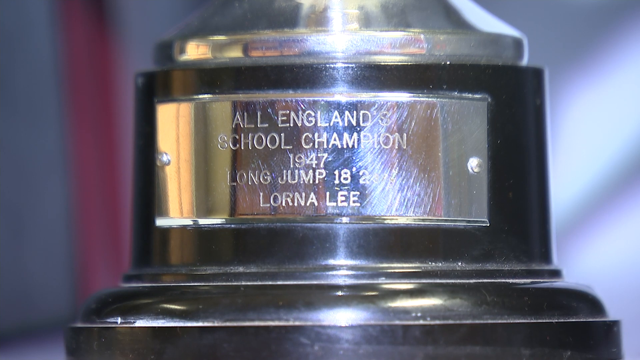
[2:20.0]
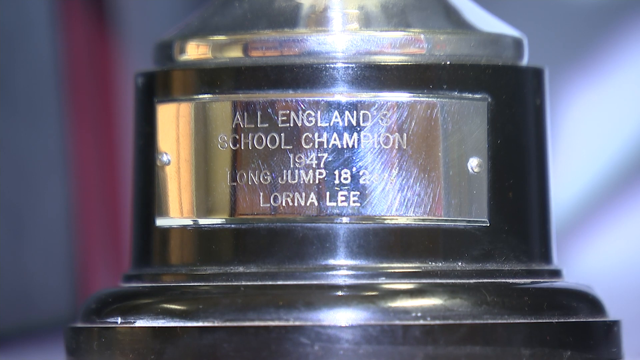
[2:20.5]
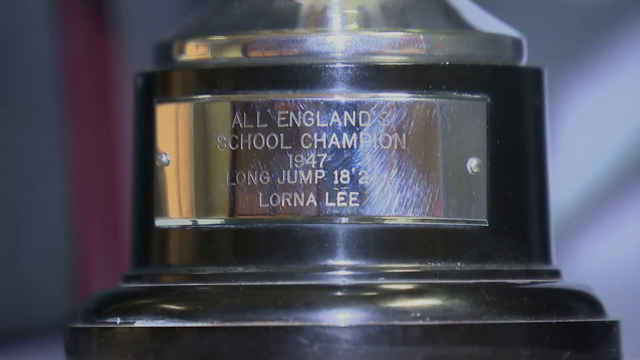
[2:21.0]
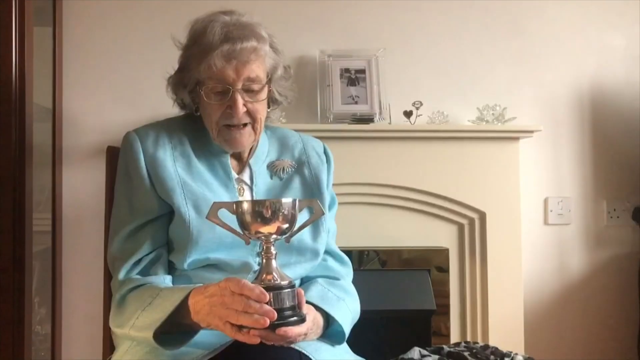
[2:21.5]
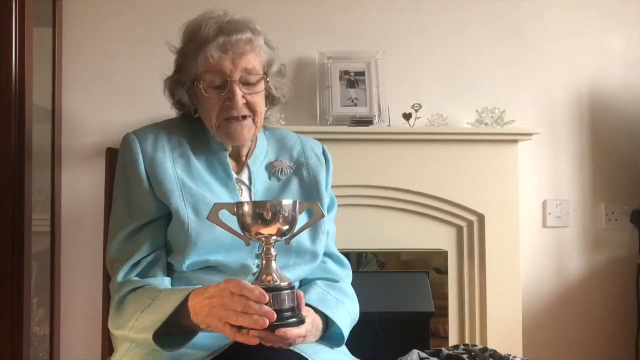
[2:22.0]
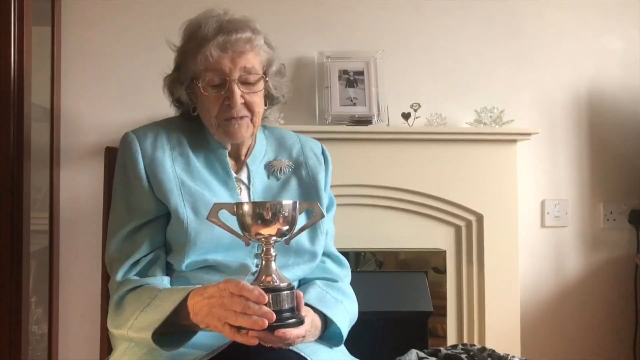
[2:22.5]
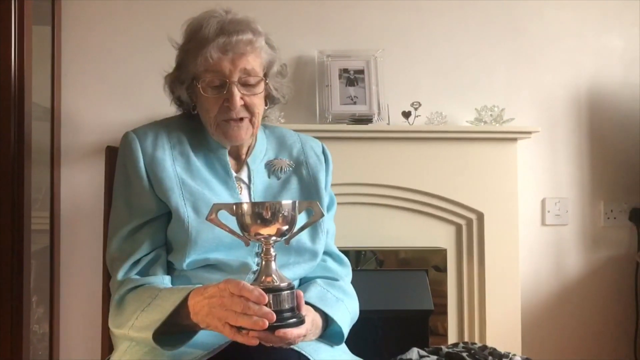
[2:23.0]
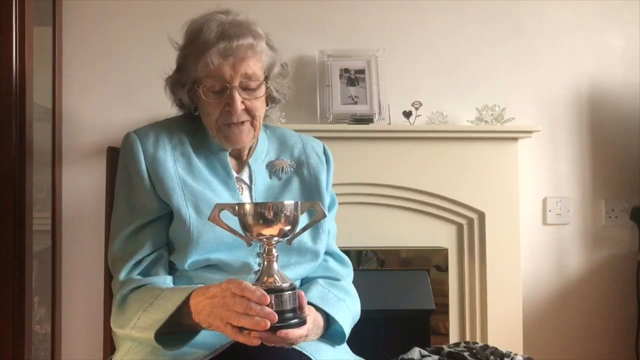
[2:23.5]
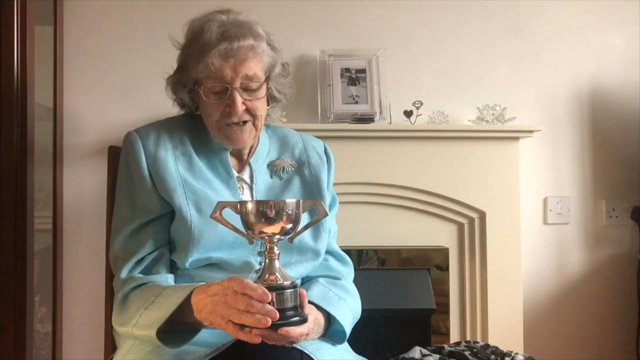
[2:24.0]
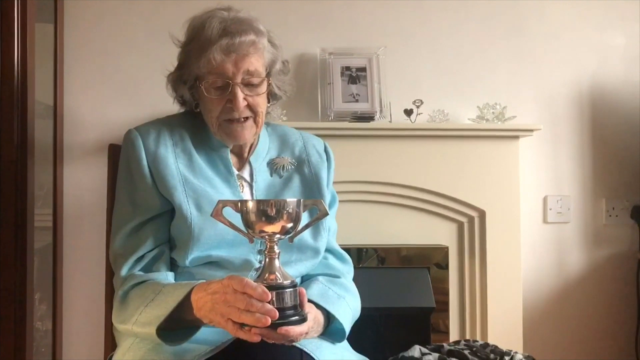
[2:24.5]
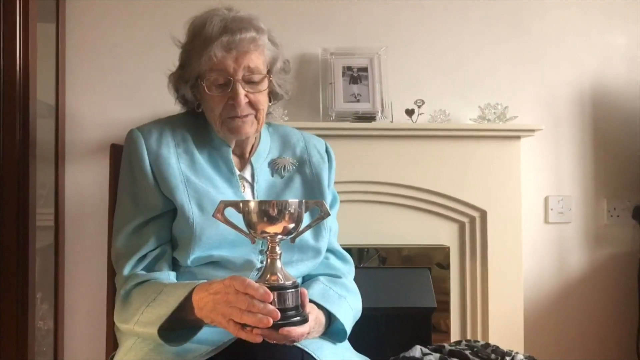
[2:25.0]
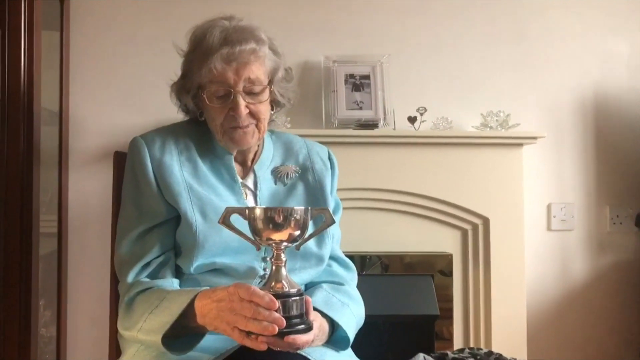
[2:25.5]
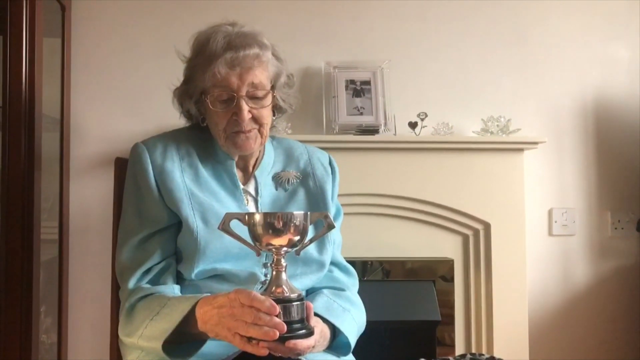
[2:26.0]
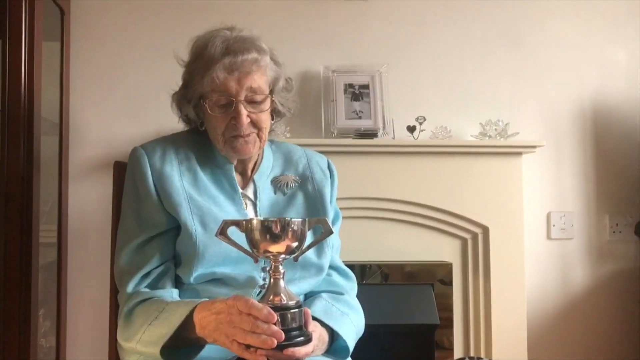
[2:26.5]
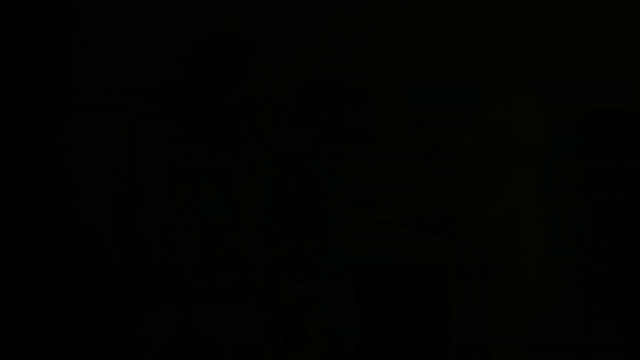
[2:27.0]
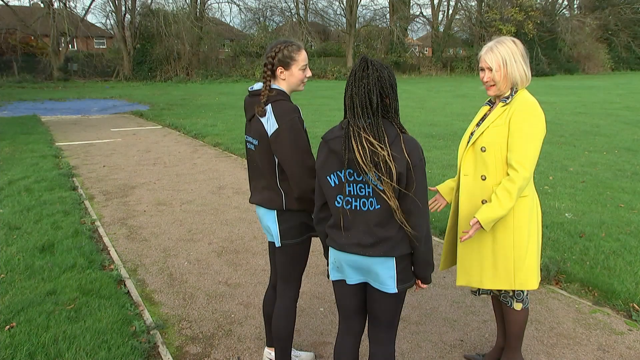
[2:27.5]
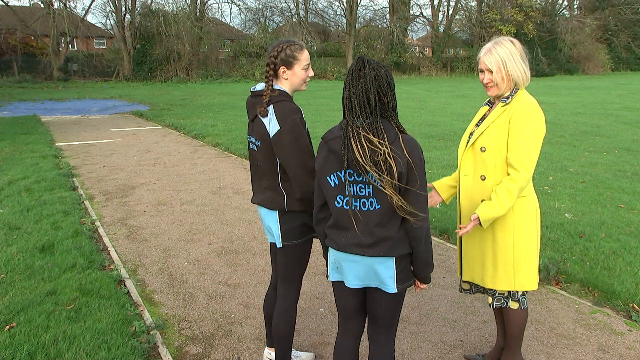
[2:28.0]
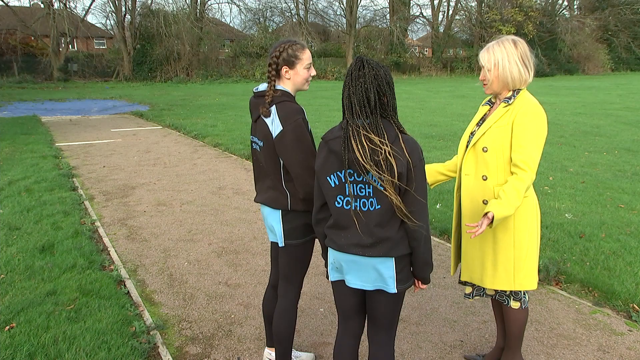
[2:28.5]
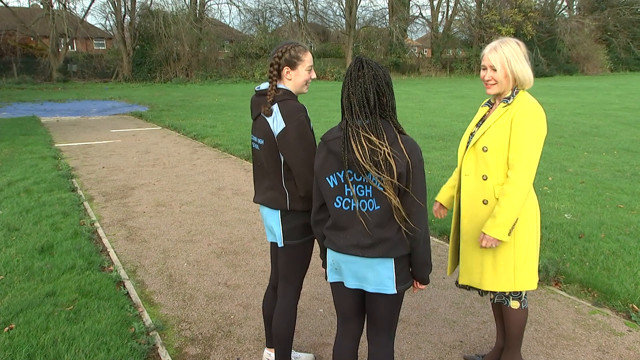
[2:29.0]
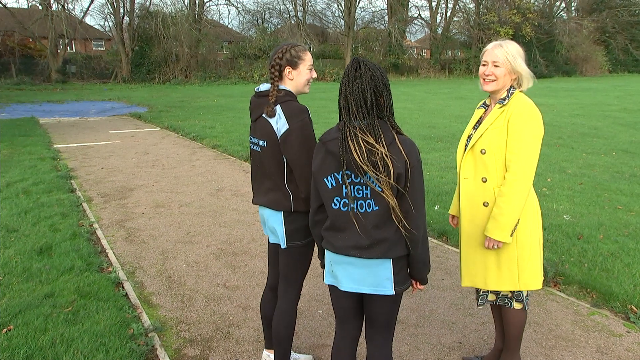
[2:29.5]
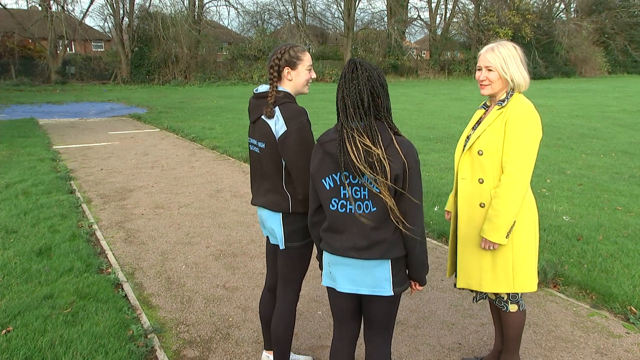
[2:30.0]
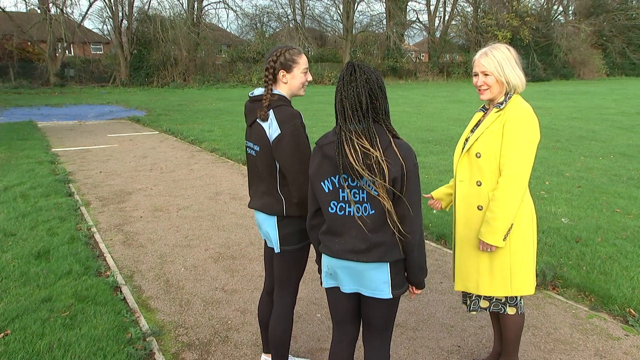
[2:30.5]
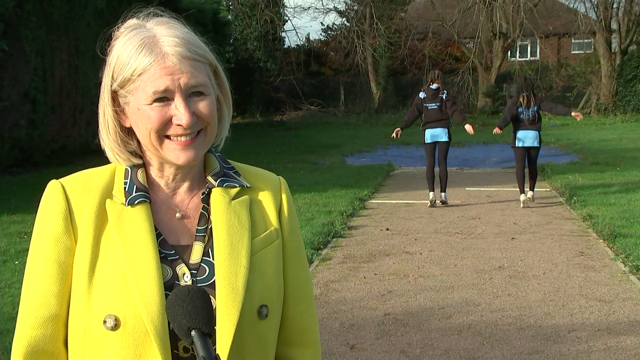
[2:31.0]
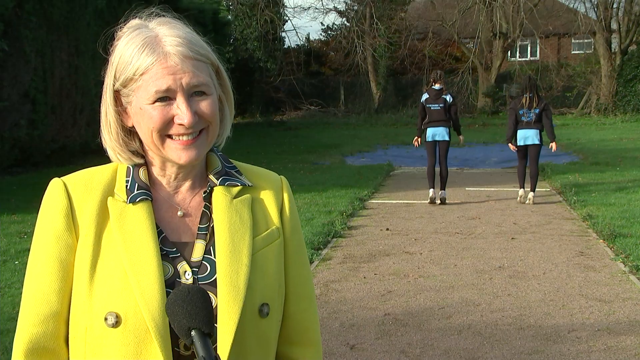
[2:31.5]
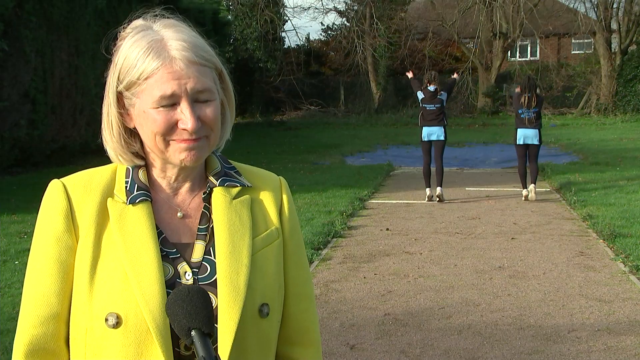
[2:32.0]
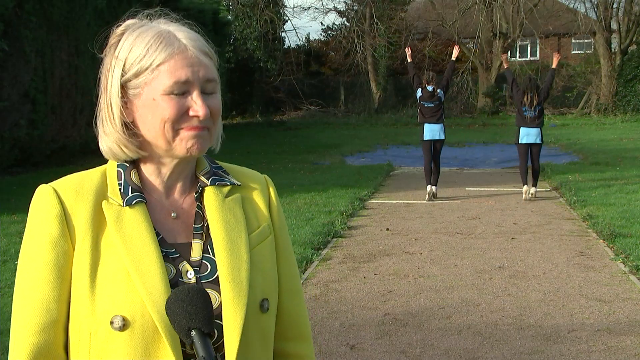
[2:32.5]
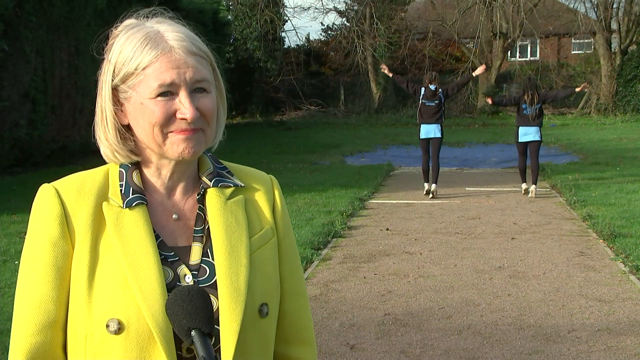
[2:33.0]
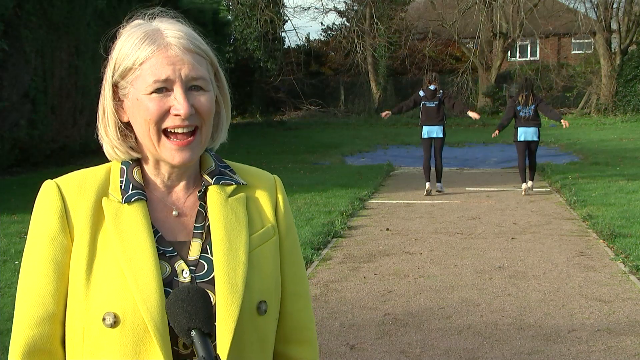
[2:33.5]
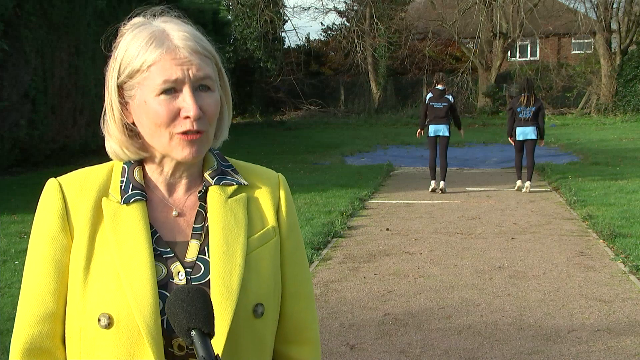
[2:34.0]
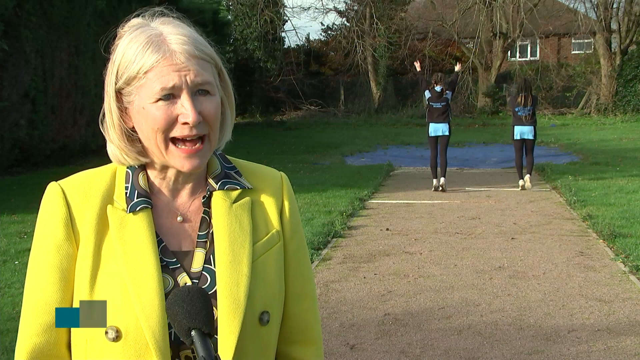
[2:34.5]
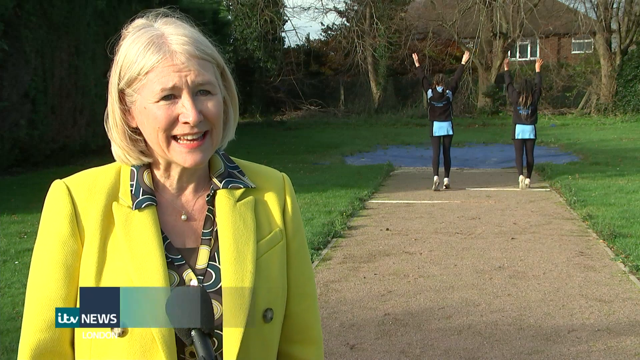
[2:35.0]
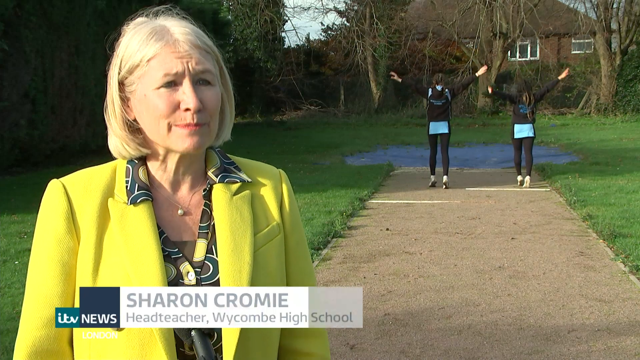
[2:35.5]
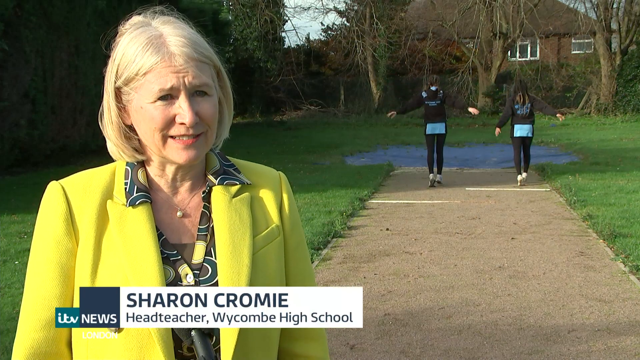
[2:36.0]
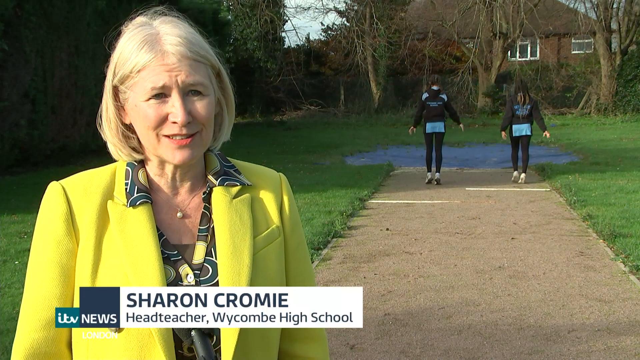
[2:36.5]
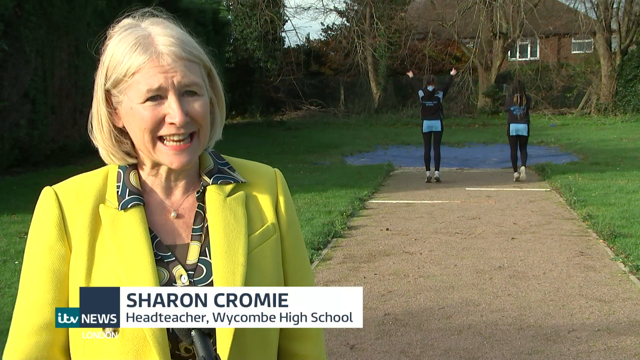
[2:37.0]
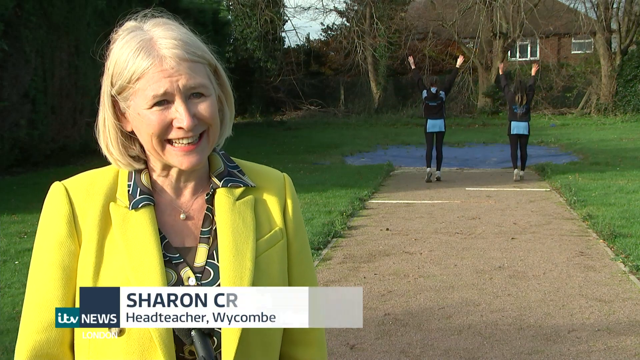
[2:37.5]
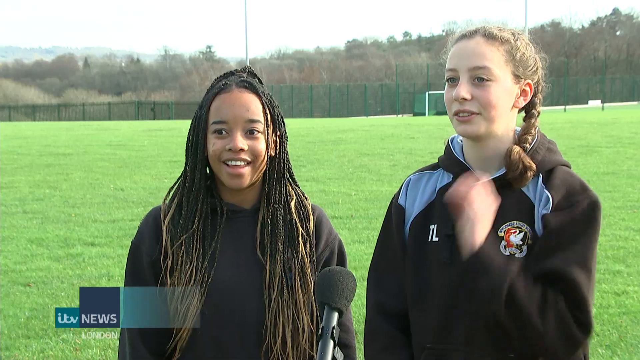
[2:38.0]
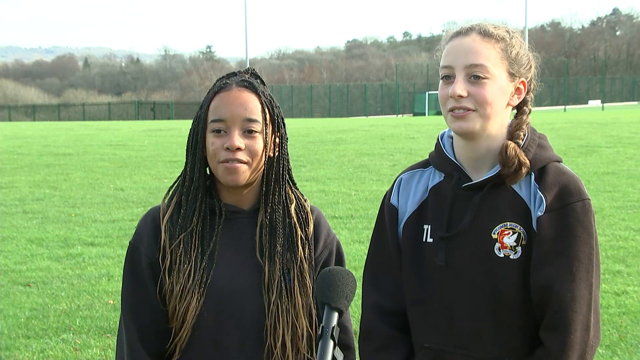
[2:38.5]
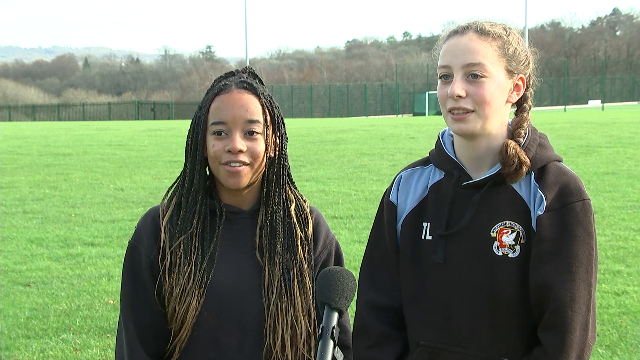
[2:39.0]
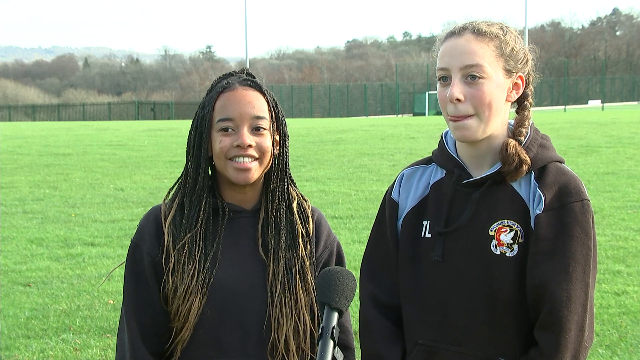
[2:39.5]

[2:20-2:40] A trophy reads "All England school champion 1947 long jump 18 feet. Lorna Lee." Lorna Lee, apparently 89 now, holds the trophy, wearing a light blue suit, glasses and earrings; she seems to be in her apartment or home. Then a blonde woman in a yellow jacket, Sharon Cromie, head teacher, talks to two young girls from Wycombe High School. The two girls stretch and practice, and they are interviewed.